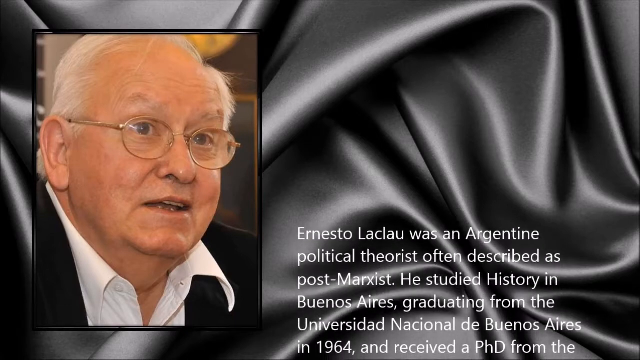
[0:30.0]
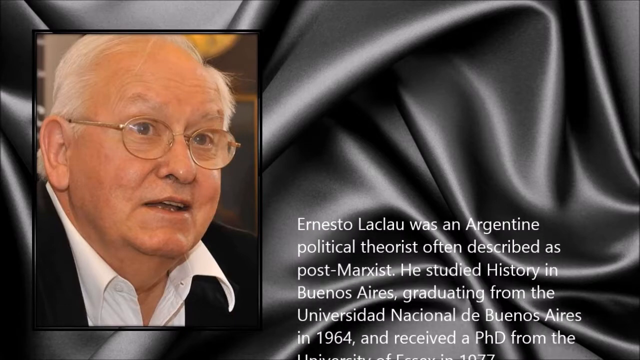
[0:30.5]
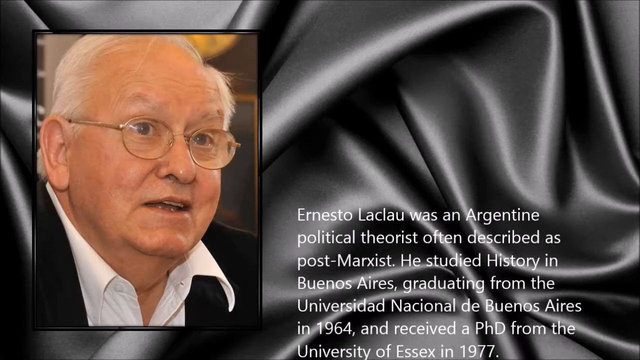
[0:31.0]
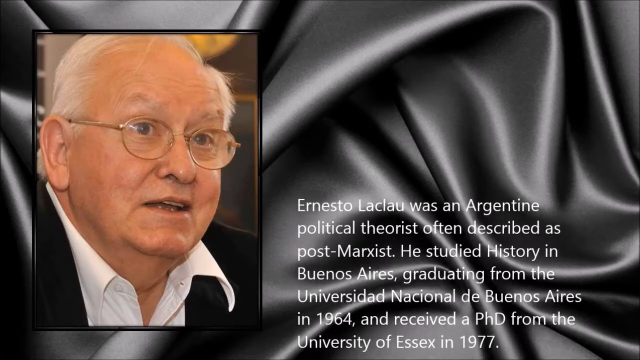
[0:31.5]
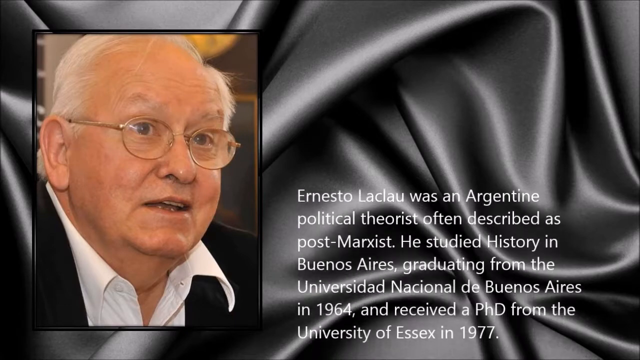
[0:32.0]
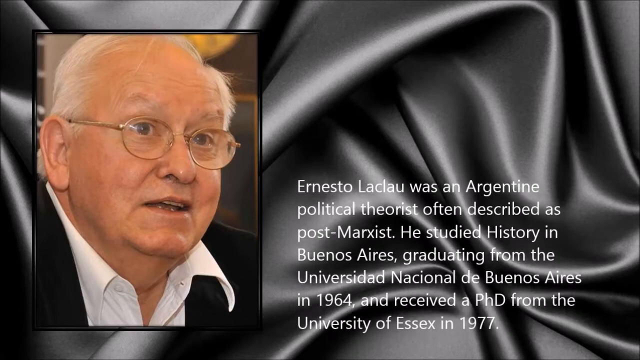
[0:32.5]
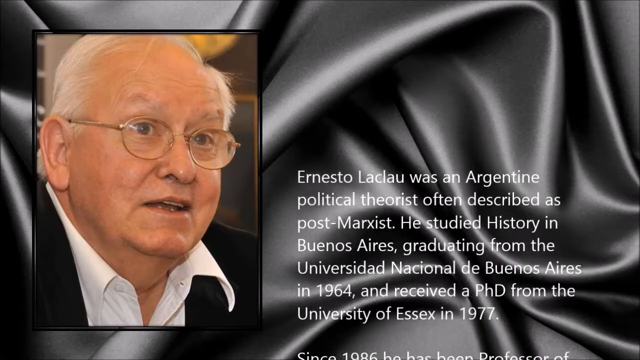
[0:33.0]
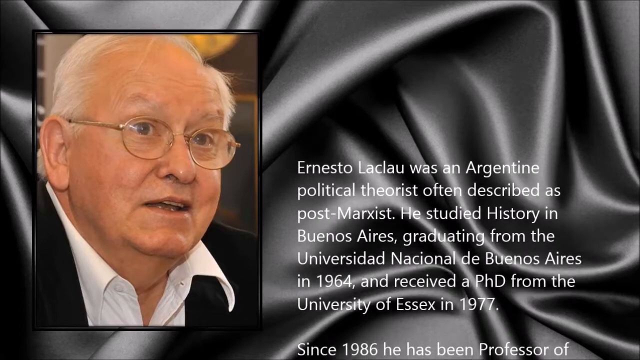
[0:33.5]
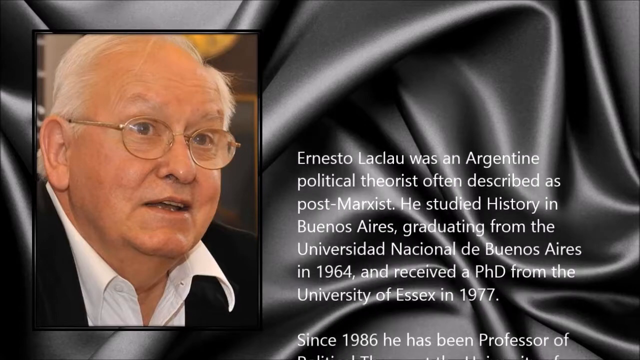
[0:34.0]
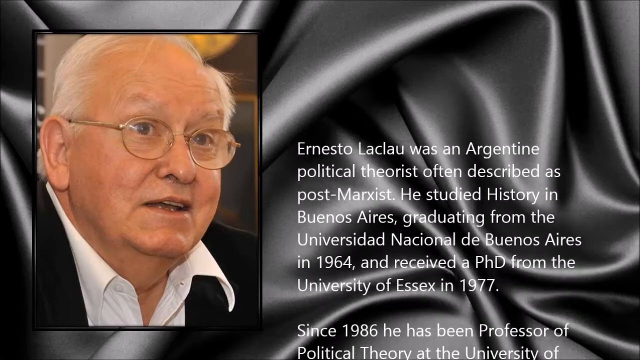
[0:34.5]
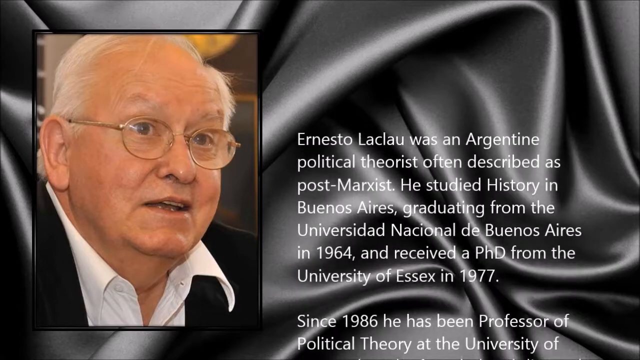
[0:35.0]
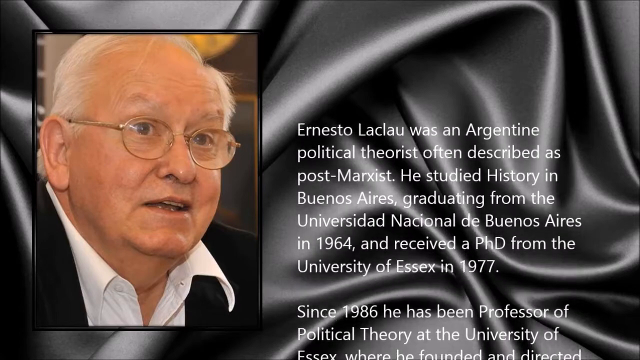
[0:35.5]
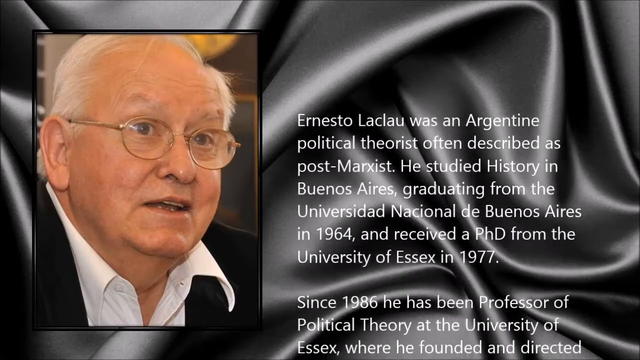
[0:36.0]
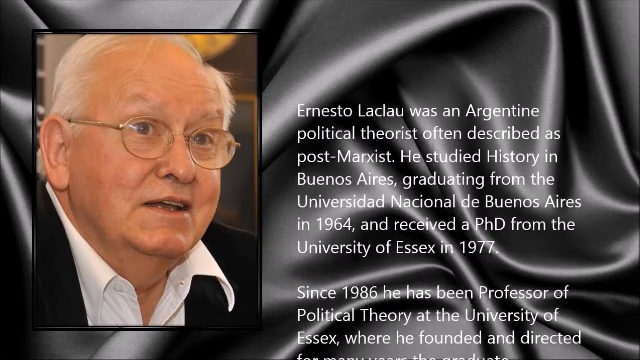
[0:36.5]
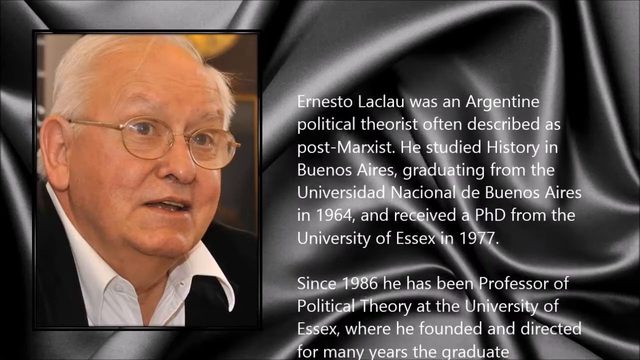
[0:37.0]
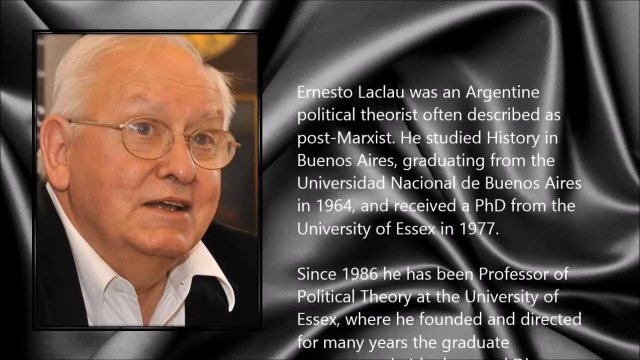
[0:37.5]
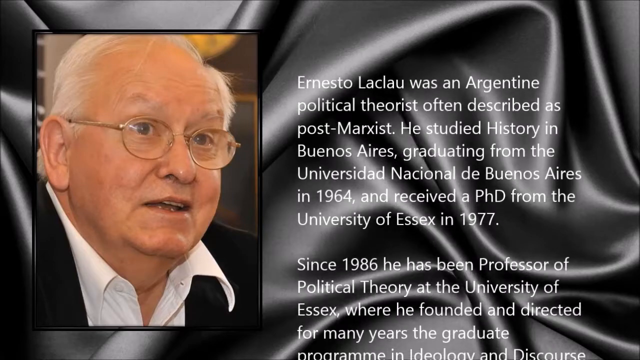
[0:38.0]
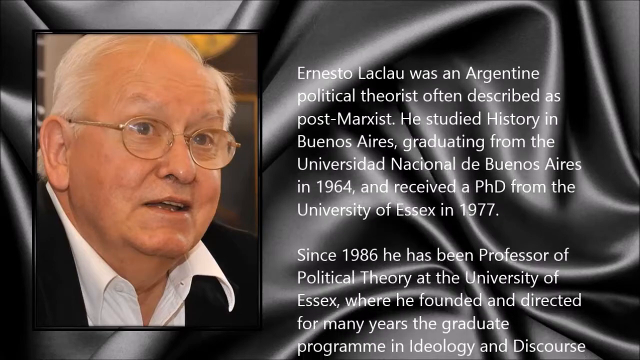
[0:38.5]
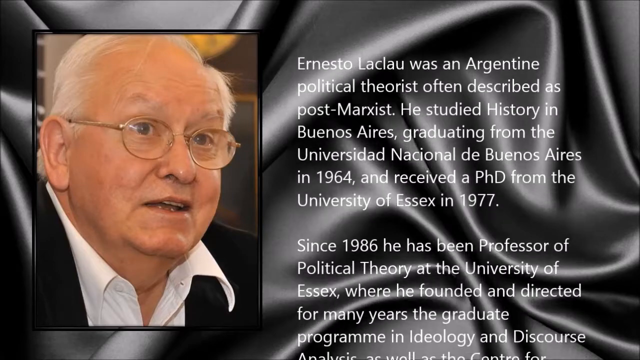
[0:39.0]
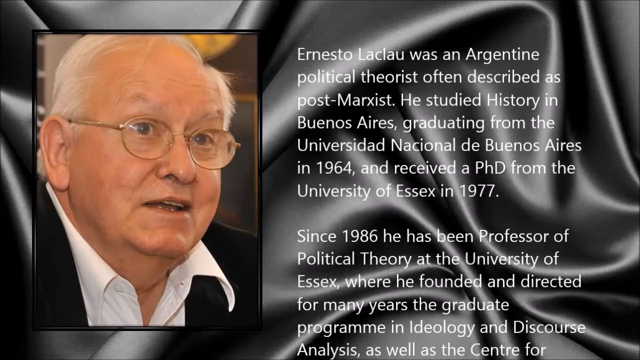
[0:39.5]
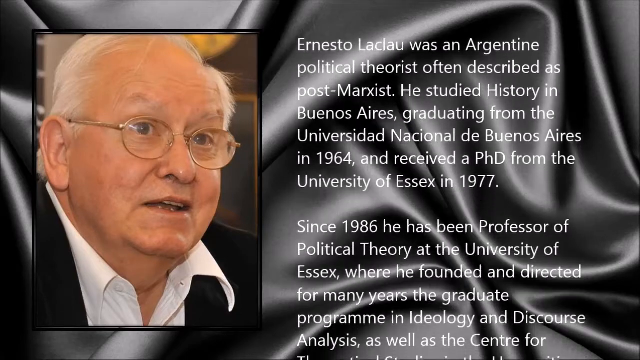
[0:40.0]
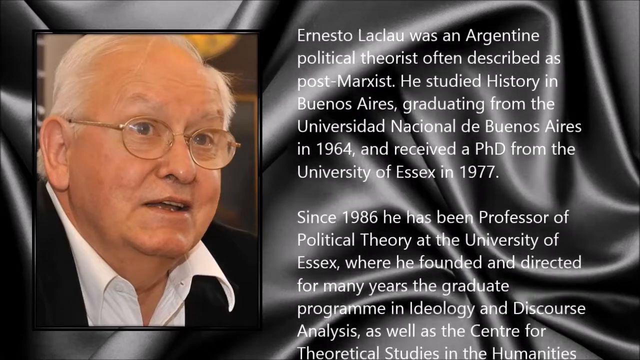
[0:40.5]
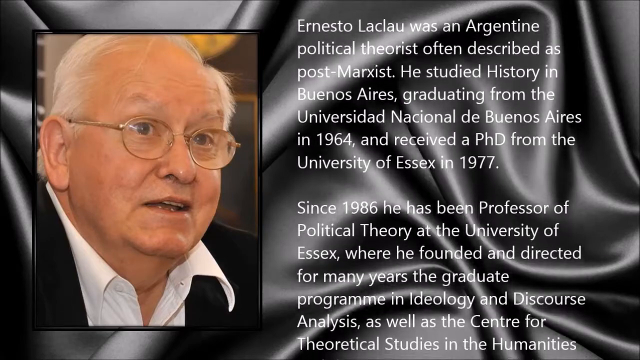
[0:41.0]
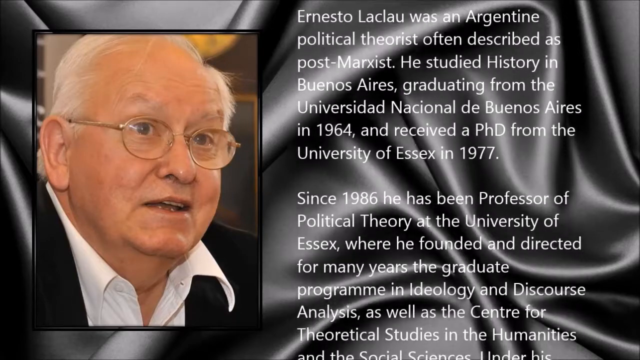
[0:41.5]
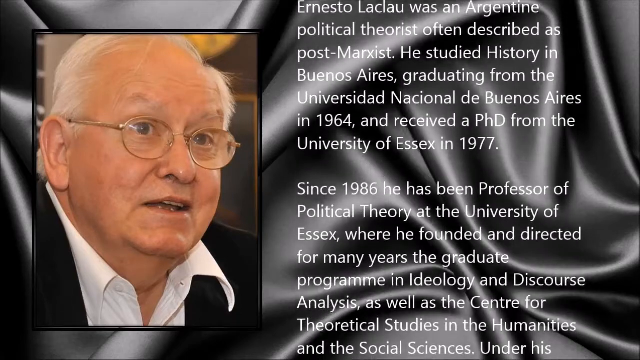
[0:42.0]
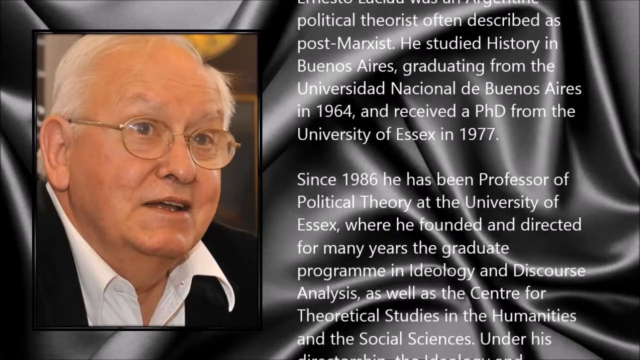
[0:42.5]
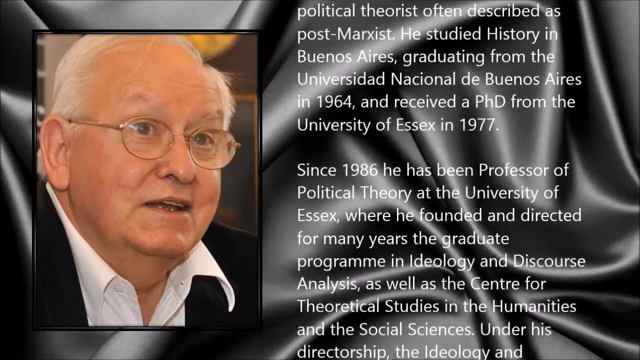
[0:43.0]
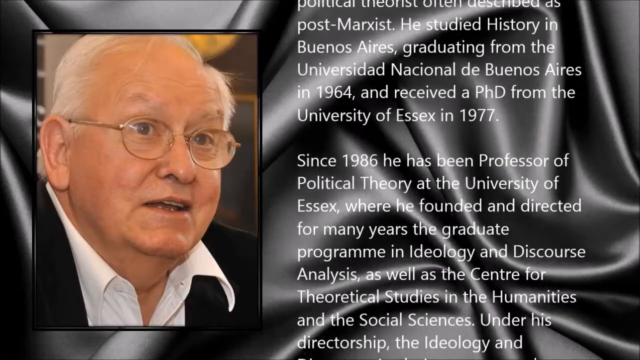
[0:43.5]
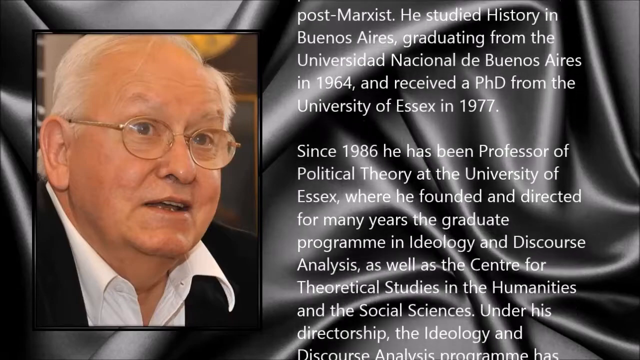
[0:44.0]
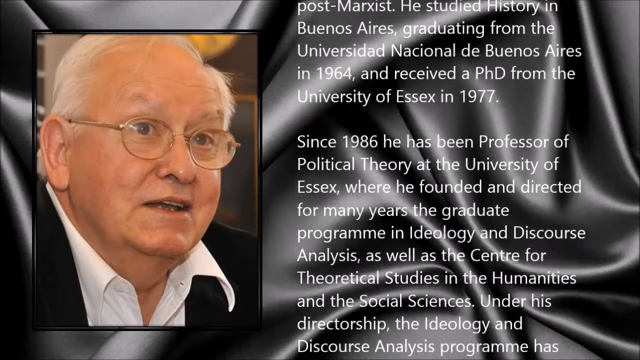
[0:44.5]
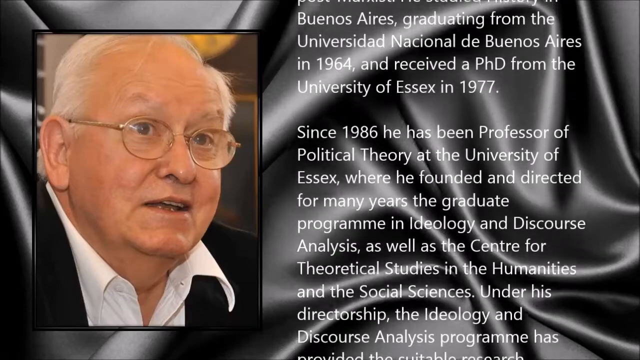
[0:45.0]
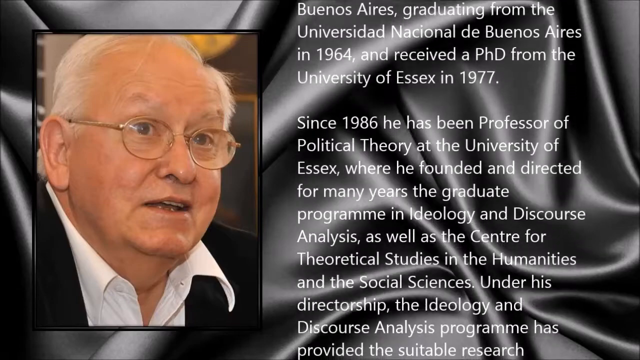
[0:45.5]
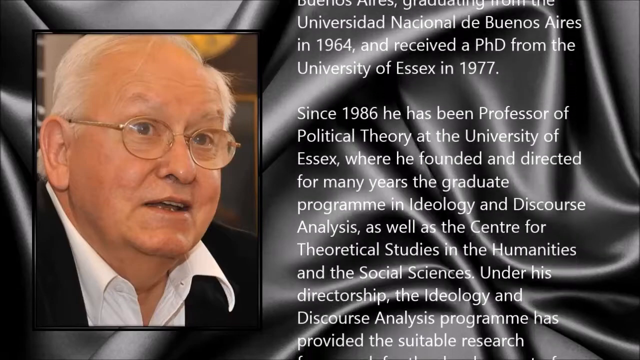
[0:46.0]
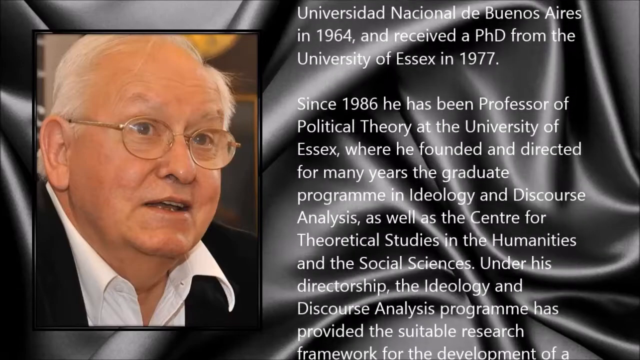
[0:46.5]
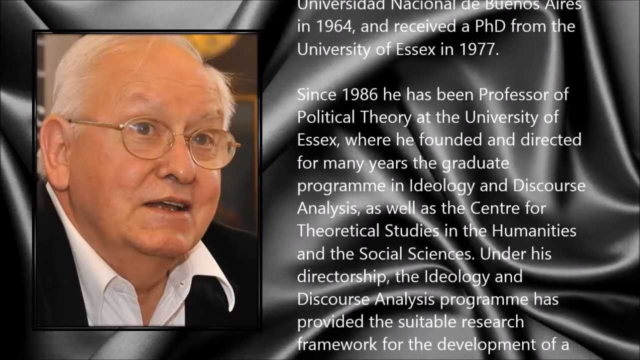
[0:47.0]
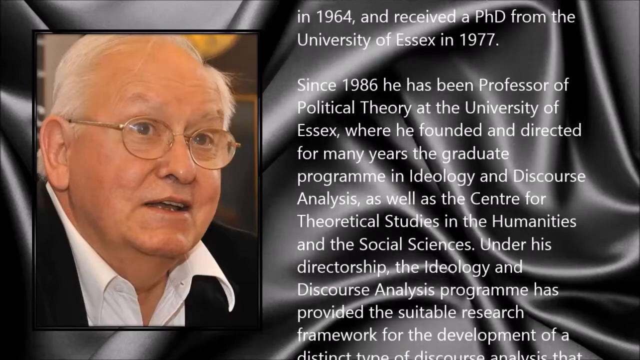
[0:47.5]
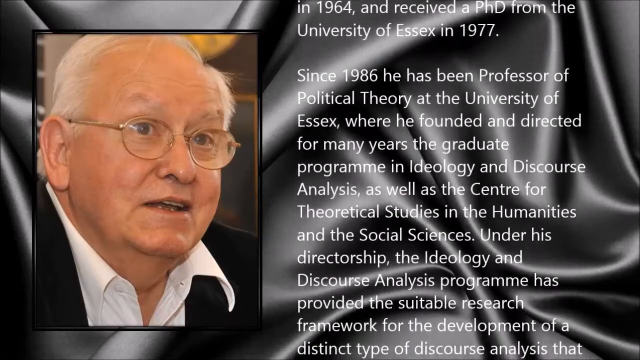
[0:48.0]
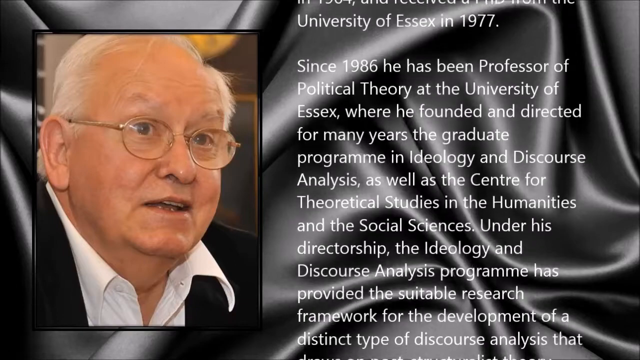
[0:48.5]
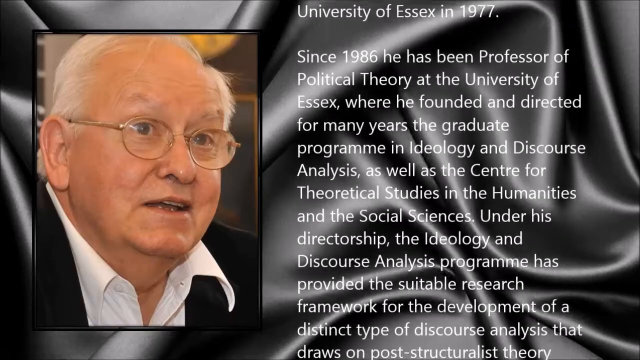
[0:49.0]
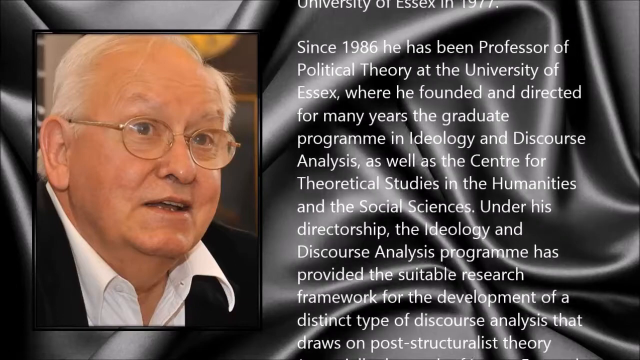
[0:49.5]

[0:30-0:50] A color picture of a man is shown alongside text stating that Ernesto Laclau was an Argentine theorist often described as post-Marxist. The text says he studied history in Buenos Aires, graduated from the University of Buenos Aires in 1964, and received a PhD from the University of Essex in 1977, that in 1986 he was a professor at the University of Essex, and that he founded and directed for many years a graduate program in discourse analysis as well as the Center for Theoretical Studies in Humanities and Social Sciences; the text goes on at length about what he did. He is an older white man with gray hair and glasses, pictured in a white button-down shirt and what looks like a black blazer. His picture is in front of a very silky, satiny piece of fabric with very soft curves and no harsh edges; it is kind of draped behind him and almost looks like it is laying on a level surface.